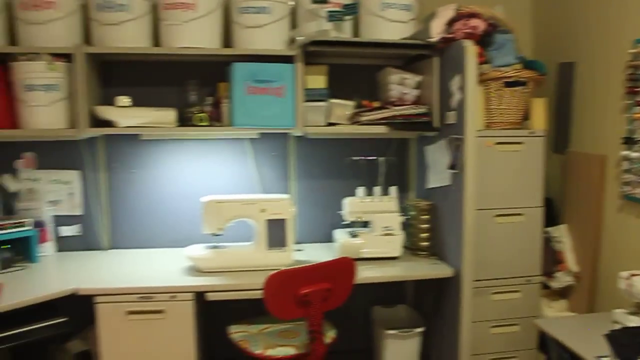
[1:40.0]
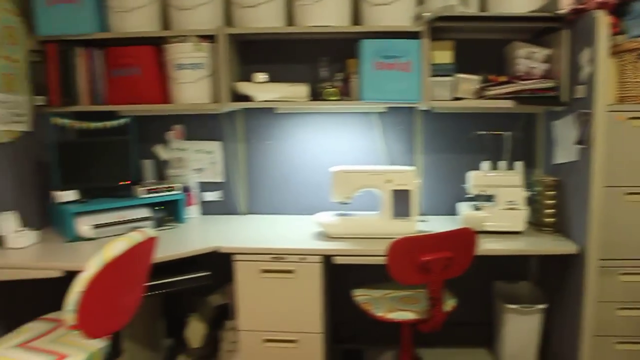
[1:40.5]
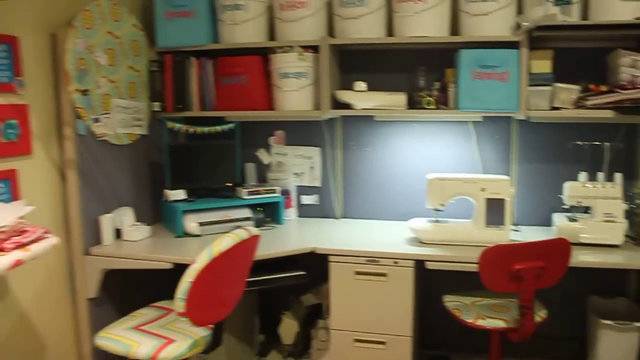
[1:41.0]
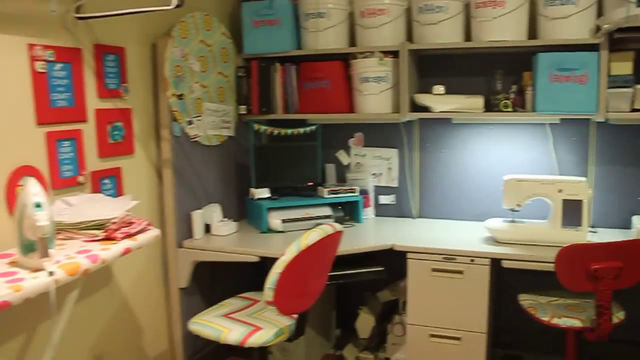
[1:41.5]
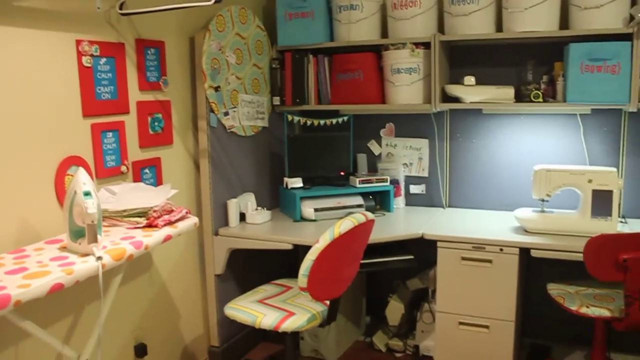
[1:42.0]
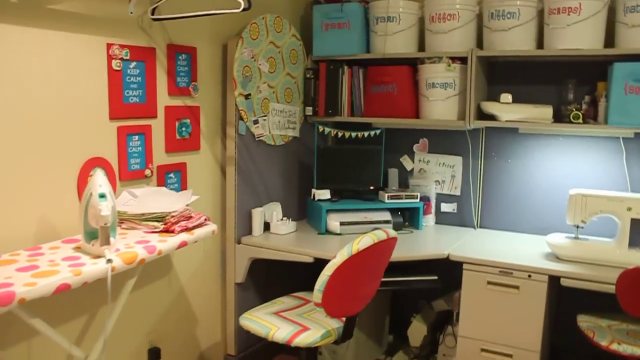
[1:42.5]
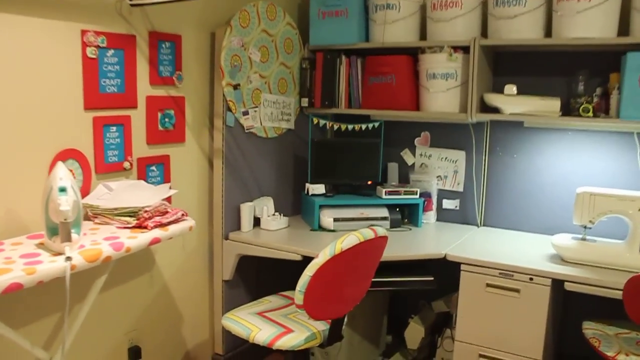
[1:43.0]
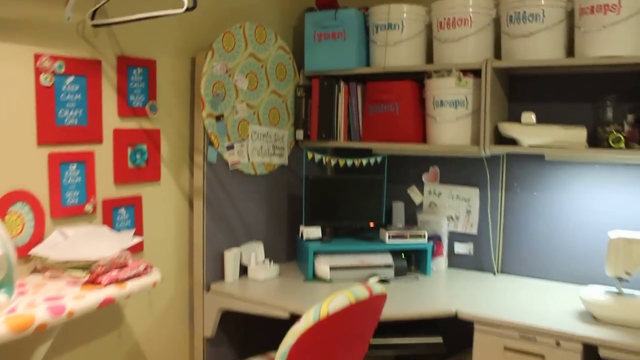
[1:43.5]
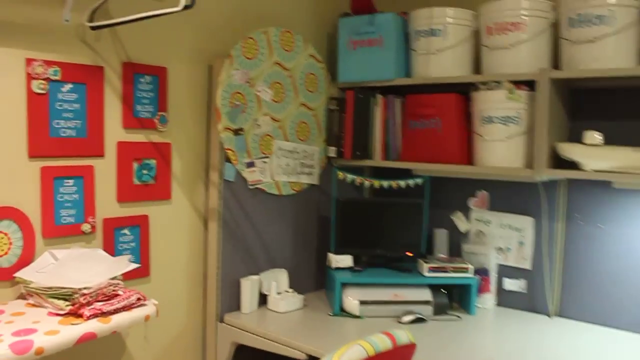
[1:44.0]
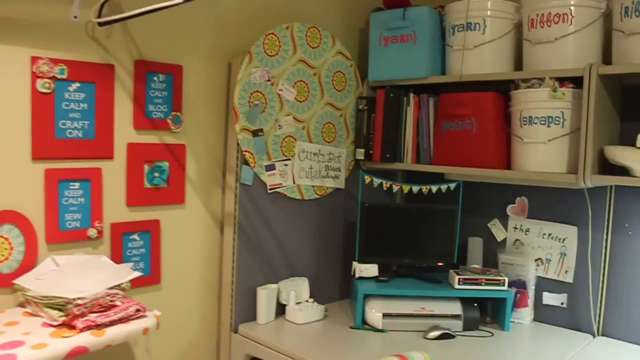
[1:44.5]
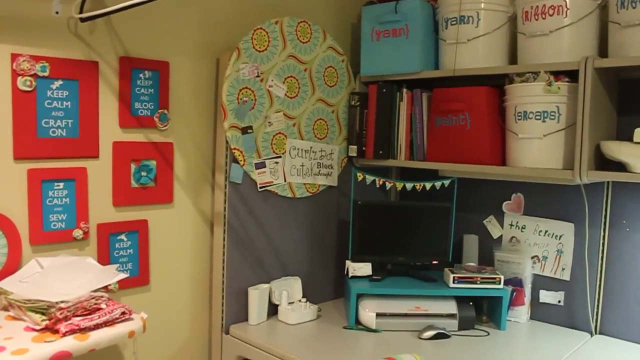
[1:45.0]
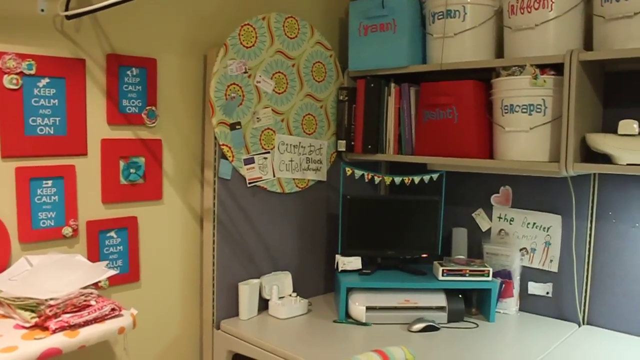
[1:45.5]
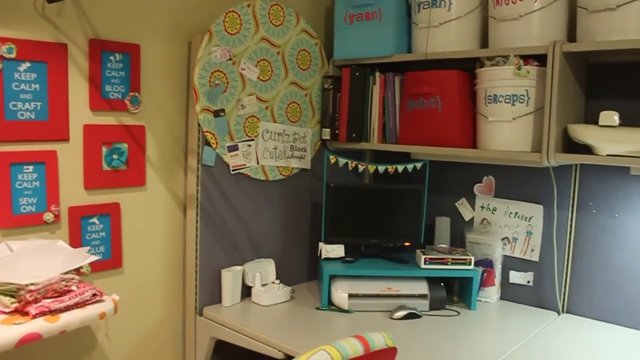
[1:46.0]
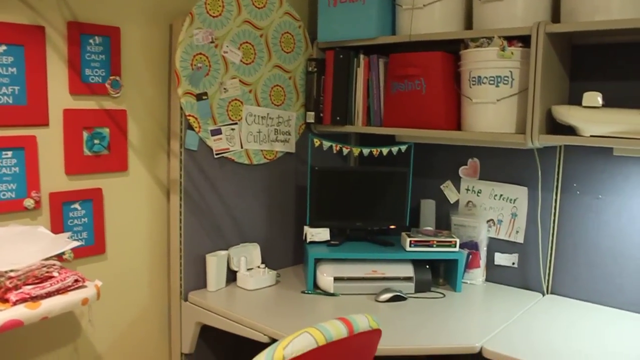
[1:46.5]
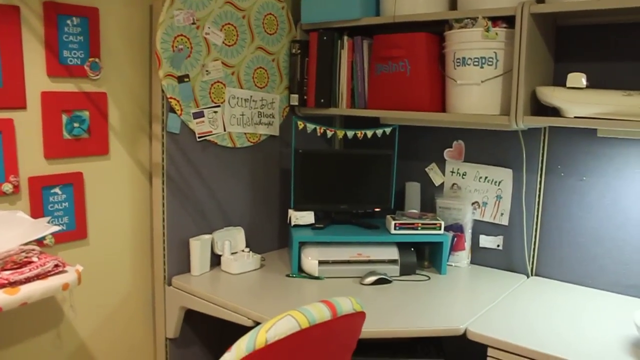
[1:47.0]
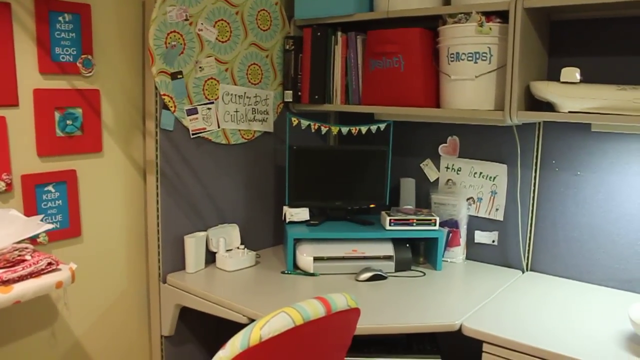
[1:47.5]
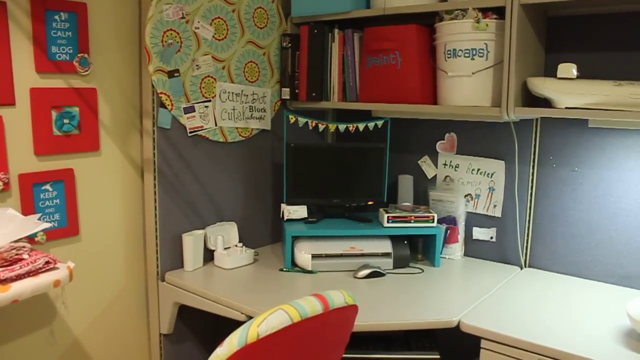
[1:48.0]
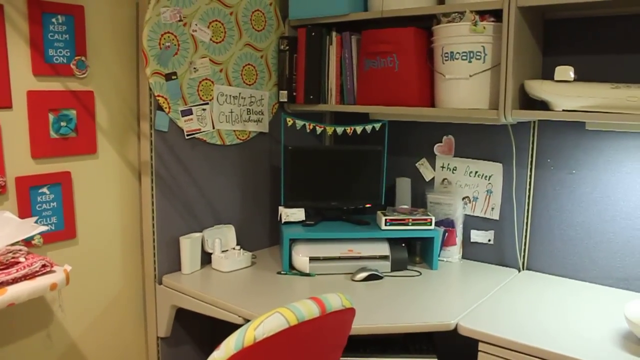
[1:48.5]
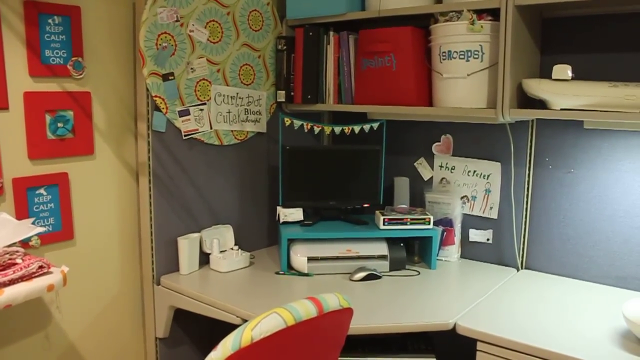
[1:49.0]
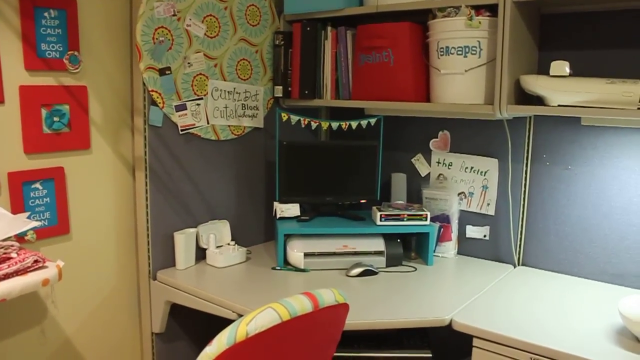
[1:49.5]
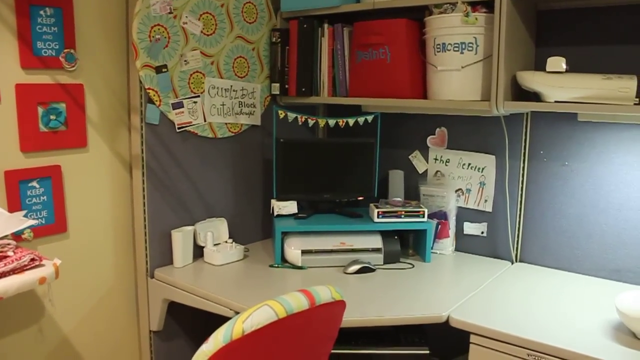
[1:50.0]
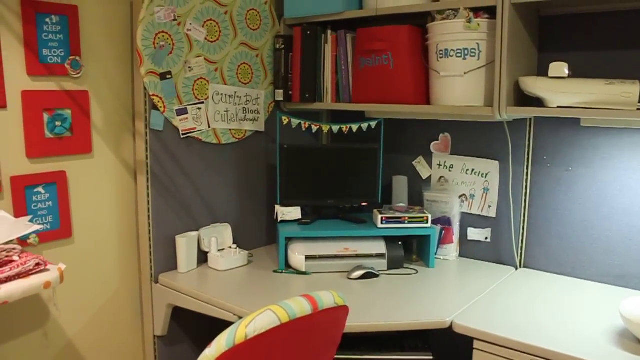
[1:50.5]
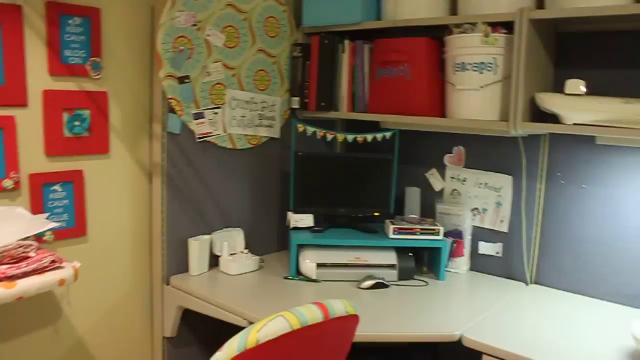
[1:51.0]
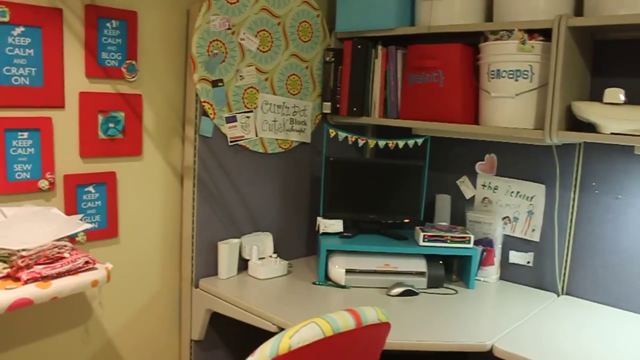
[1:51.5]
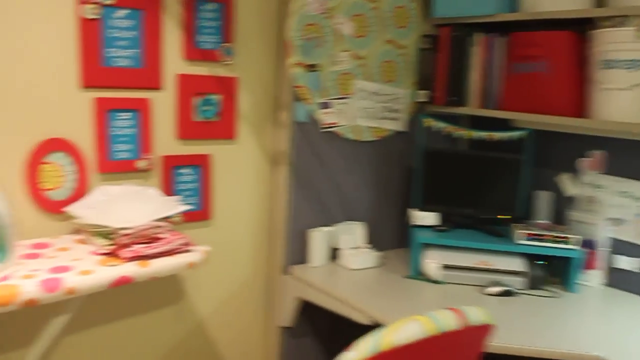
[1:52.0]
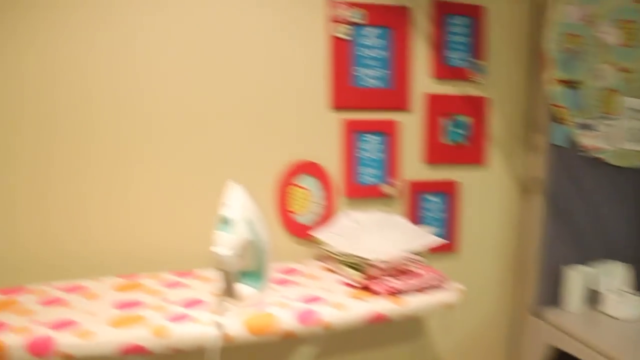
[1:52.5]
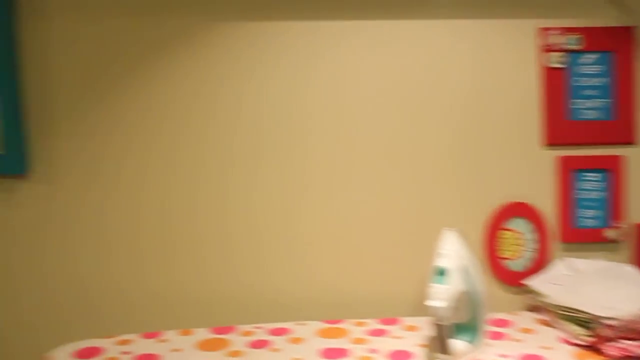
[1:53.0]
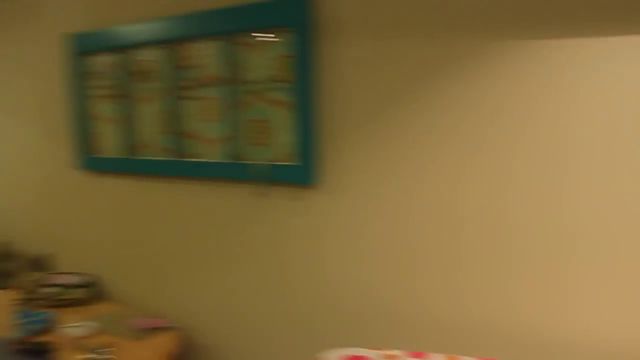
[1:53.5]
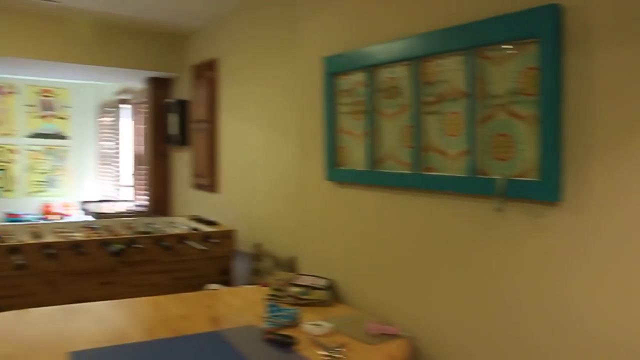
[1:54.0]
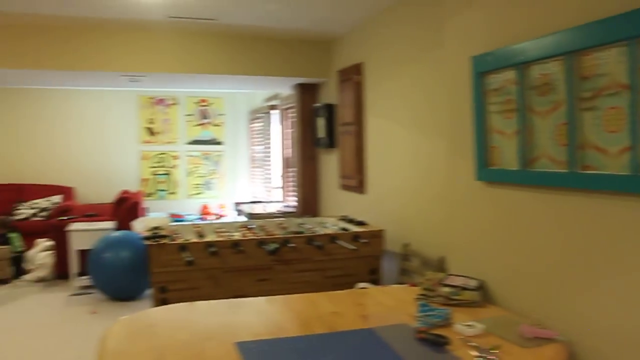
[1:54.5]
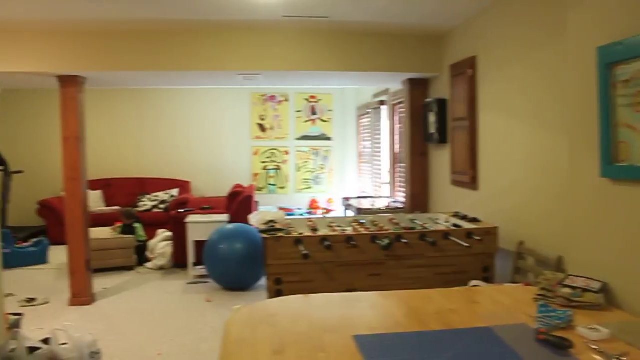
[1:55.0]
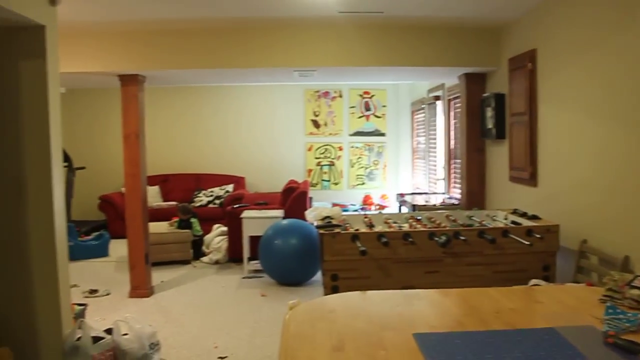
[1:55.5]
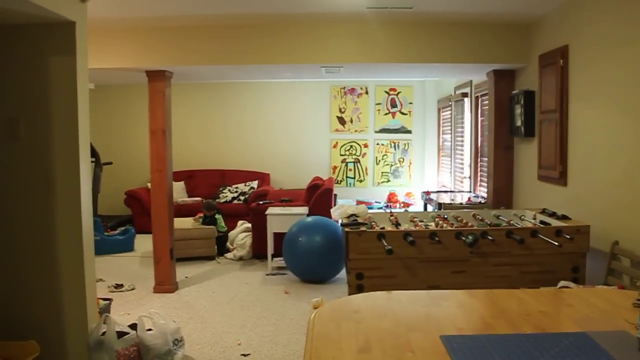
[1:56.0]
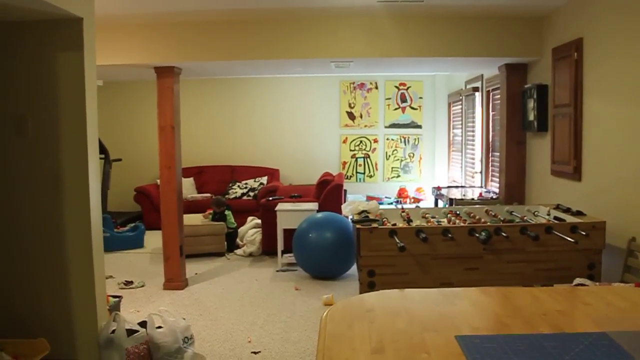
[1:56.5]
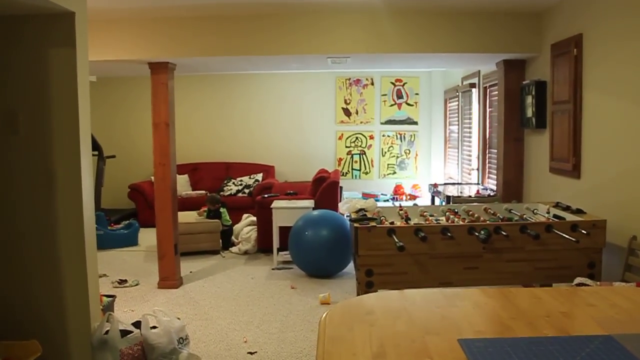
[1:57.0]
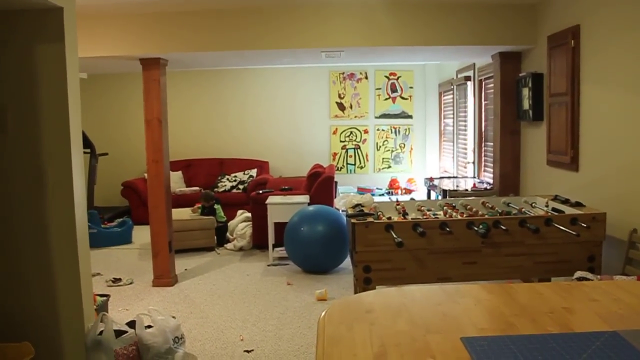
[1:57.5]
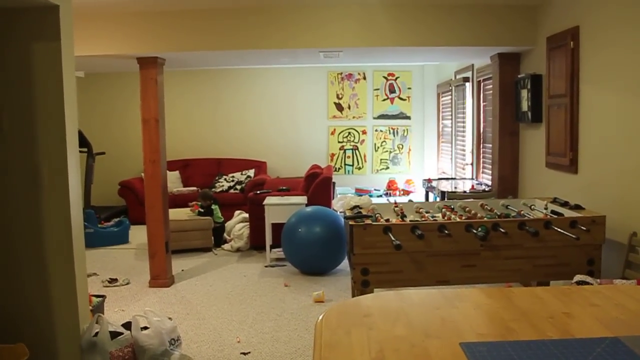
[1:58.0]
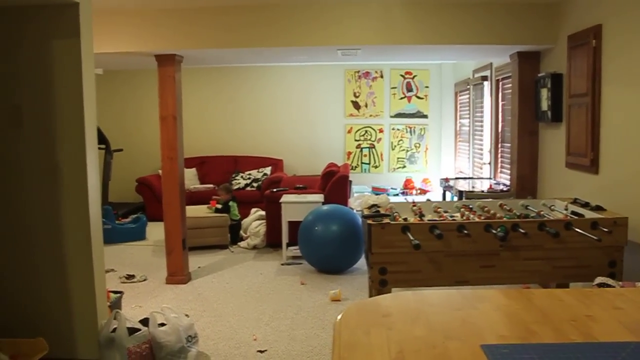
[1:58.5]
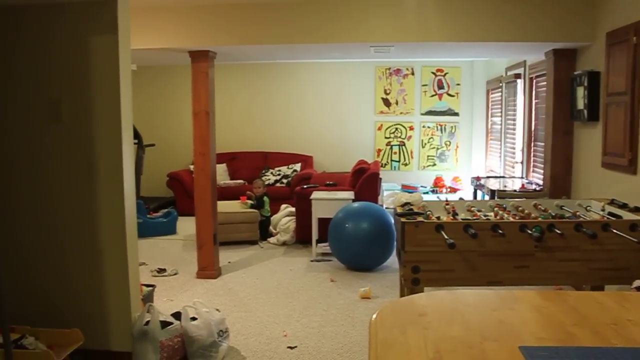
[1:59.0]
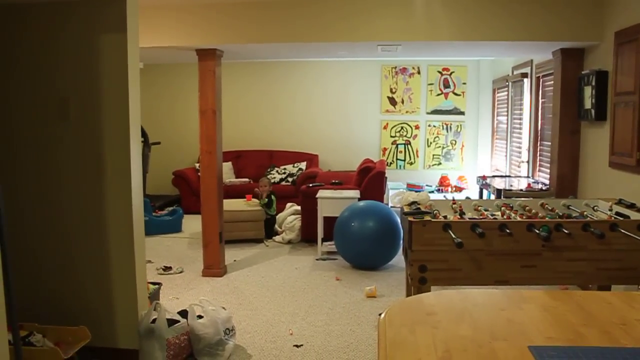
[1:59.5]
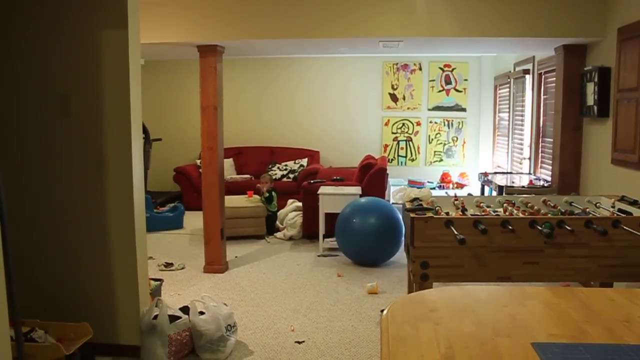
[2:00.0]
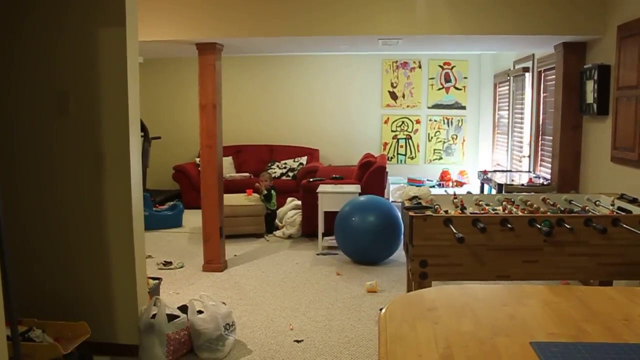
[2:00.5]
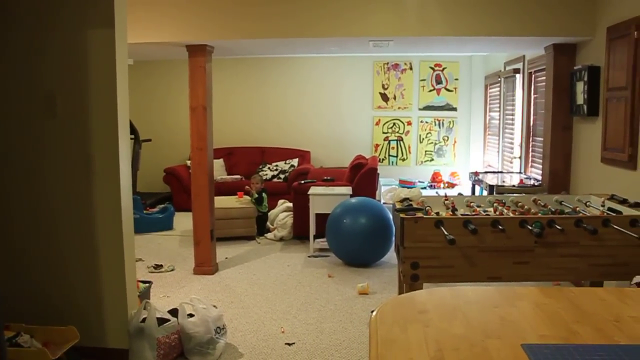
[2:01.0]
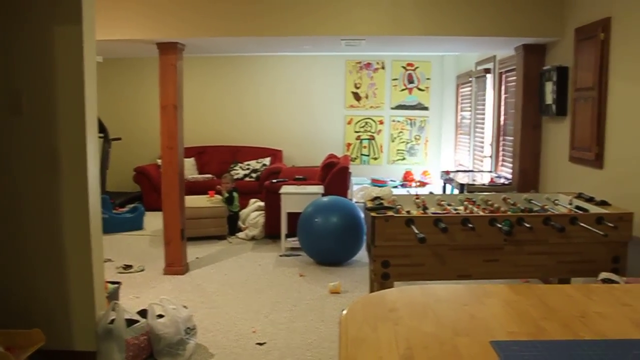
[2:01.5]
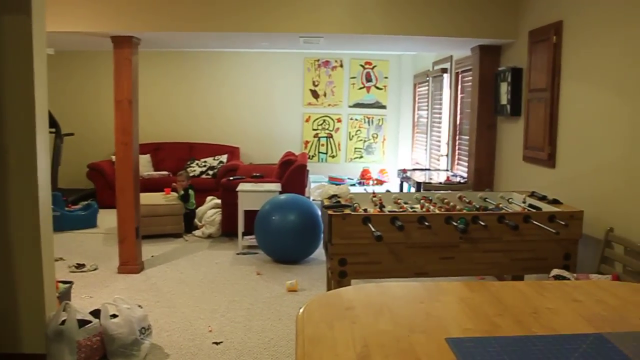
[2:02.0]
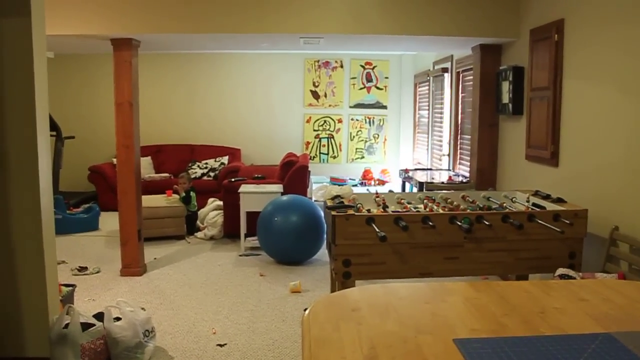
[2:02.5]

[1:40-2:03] A camera person films a work area composed of a white desk. On top of the desk is a sewing machine, with various other devices used for crafting thrown about on the table. Above the table are two shelves. The top shelf holds multiple white buckets and one blue box on the left side; the buckets all have words written on them and are filled with crafting materials. Below that are small cubicles, all filled with random crafting junk. The camera moves slightly toward the left, showing the walls of the room, which are a yellowish color. On the wall next to the desk are various motivational frames, red with blue in the middle, all saying something to the effect of "keep calm". Next to the left wall is an ironing board.